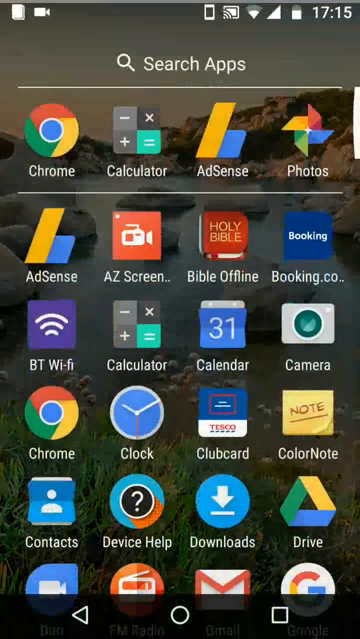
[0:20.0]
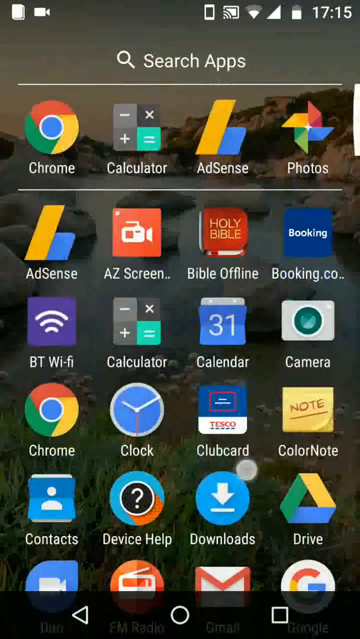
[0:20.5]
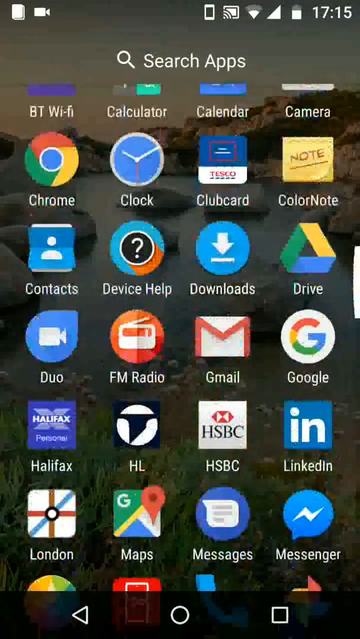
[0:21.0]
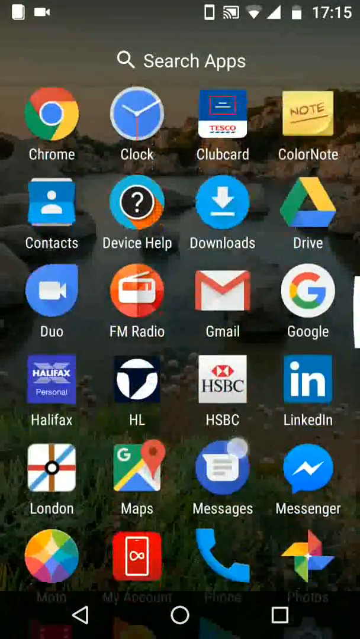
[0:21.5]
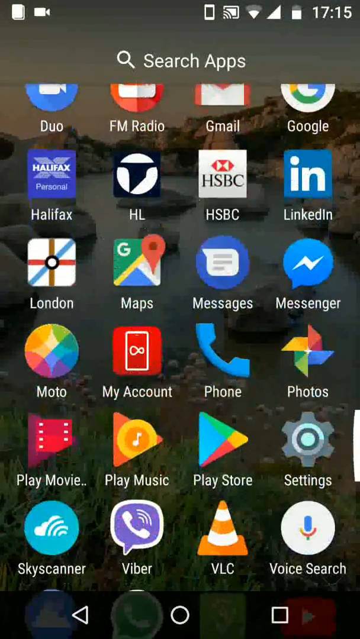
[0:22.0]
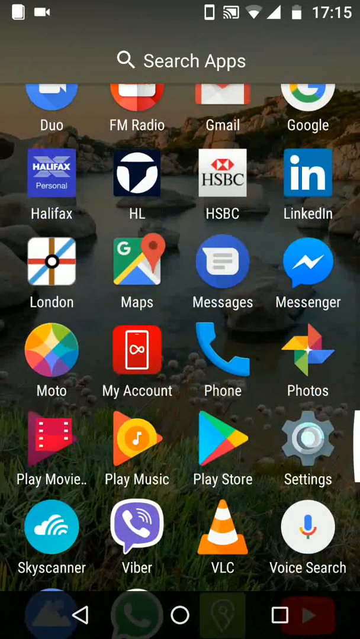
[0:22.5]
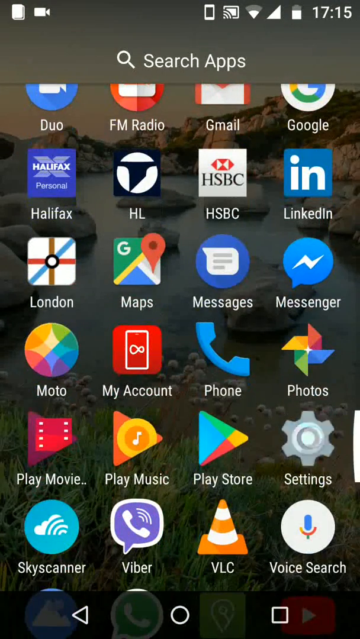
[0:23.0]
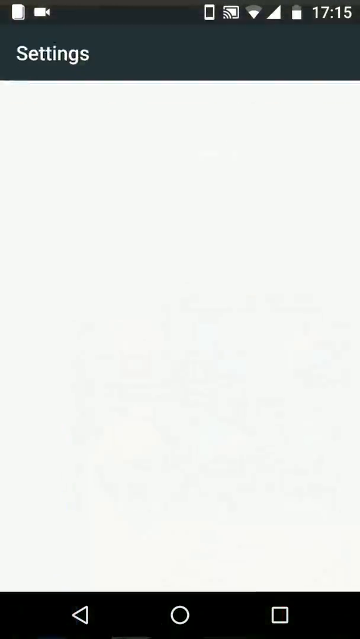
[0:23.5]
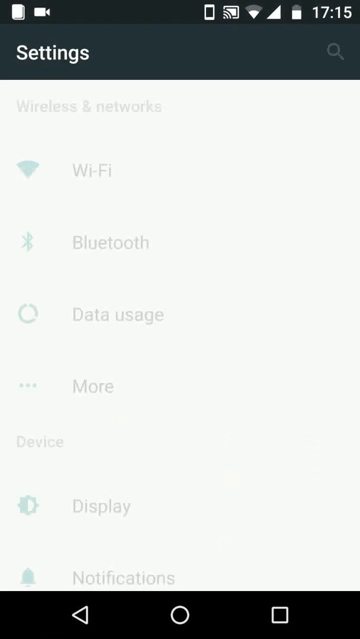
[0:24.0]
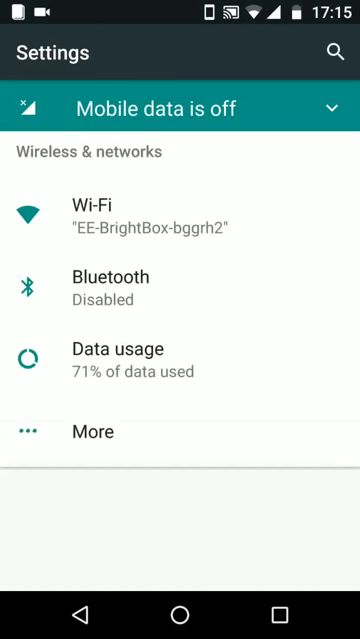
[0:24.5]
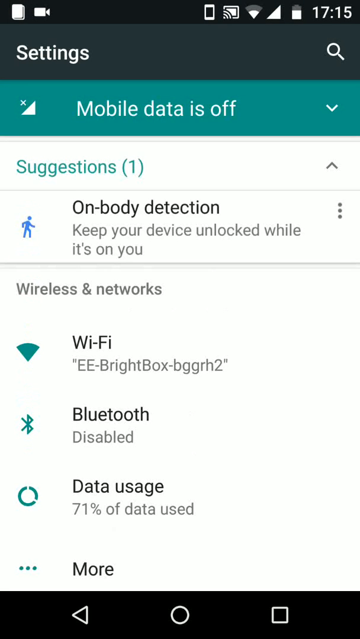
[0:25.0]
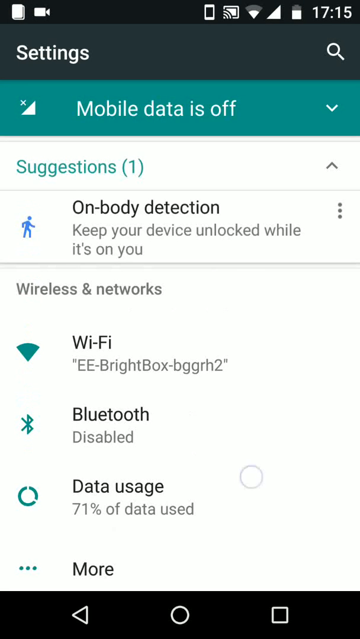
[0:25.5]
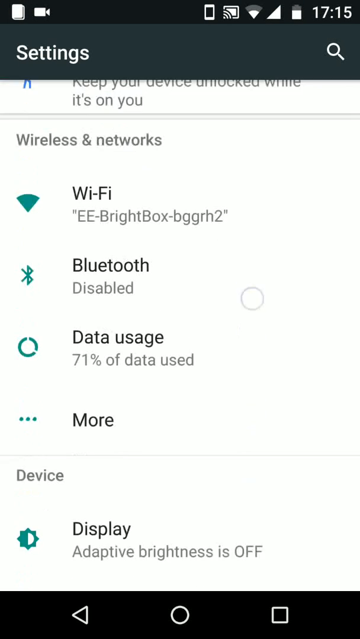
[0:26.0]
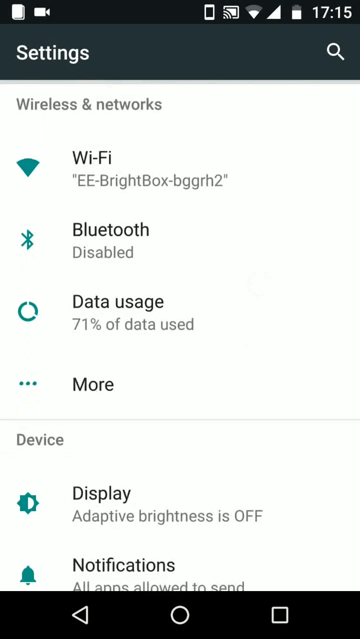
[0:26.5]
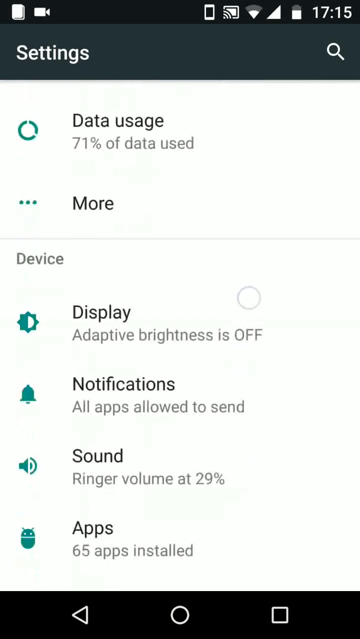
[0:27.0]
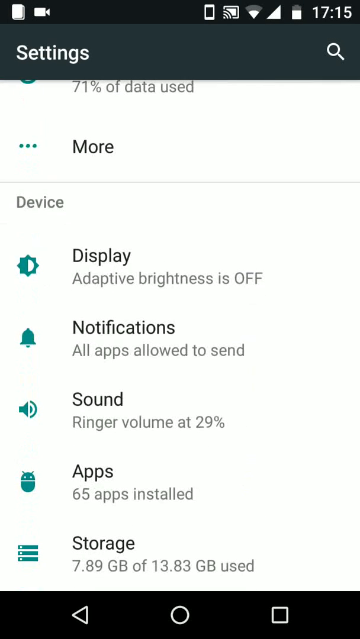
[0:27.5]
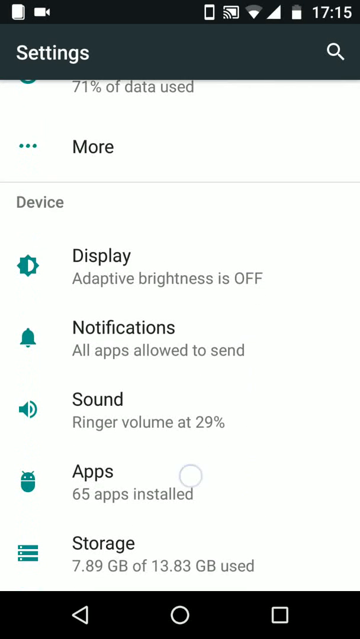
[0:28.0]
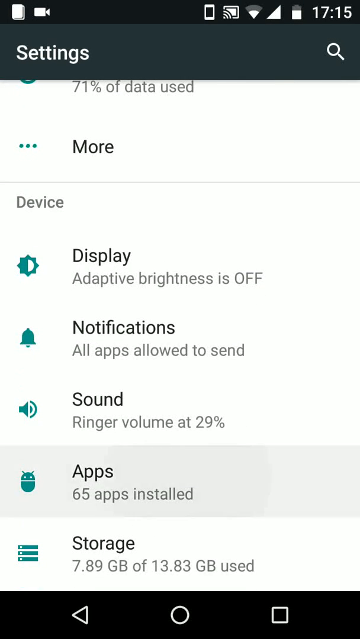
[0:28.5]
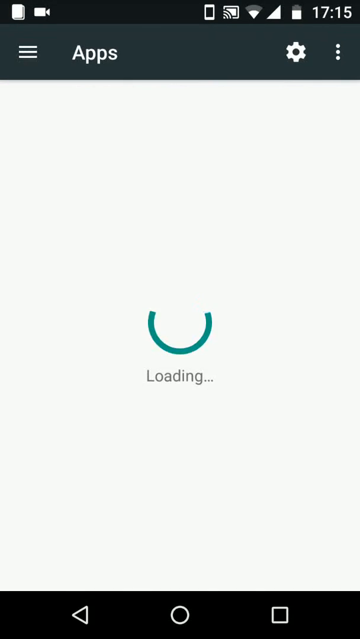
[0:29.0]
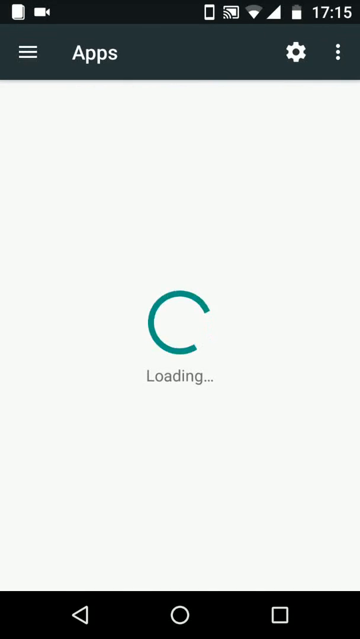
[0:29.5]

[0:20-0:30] The view moves from the home screen to the section listing all the installed apps. The menu goes up and the user scrolls down through the icons of the many installed apps. The view then goes down to the quick menu, which shows settings such as volume, screen color and brightness.